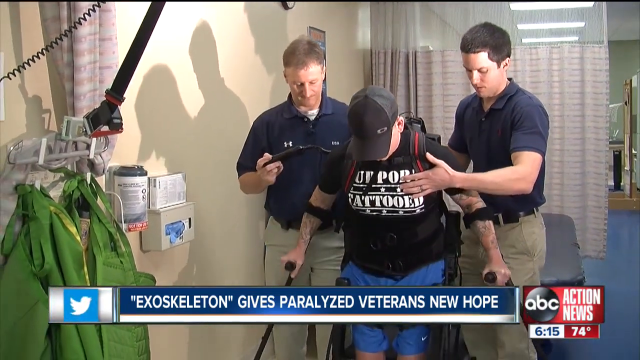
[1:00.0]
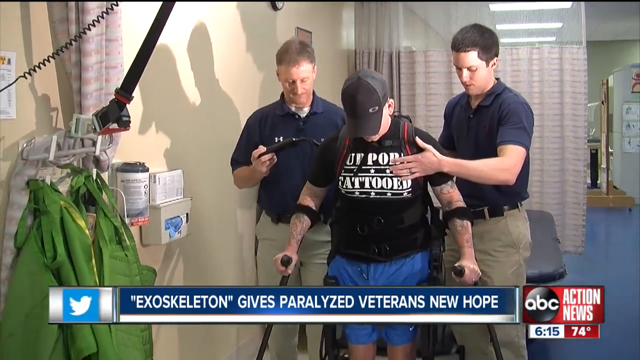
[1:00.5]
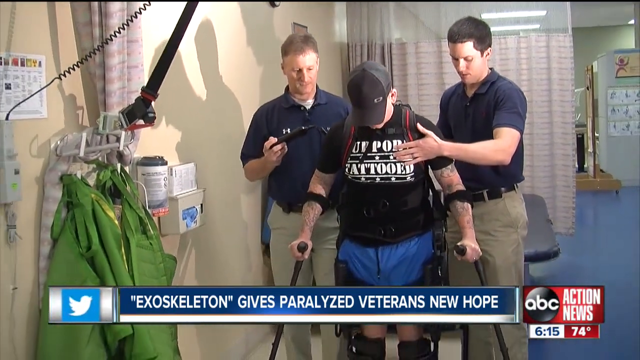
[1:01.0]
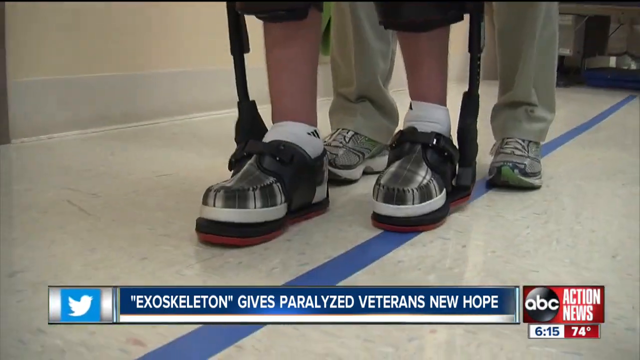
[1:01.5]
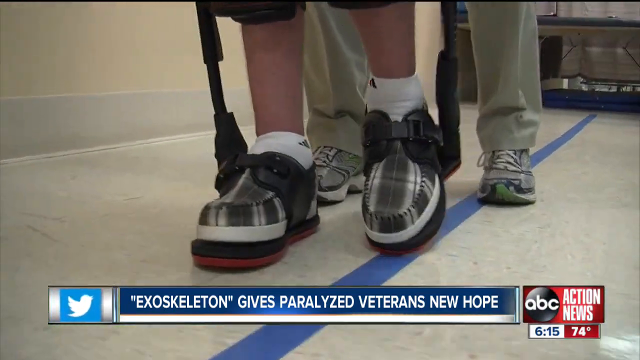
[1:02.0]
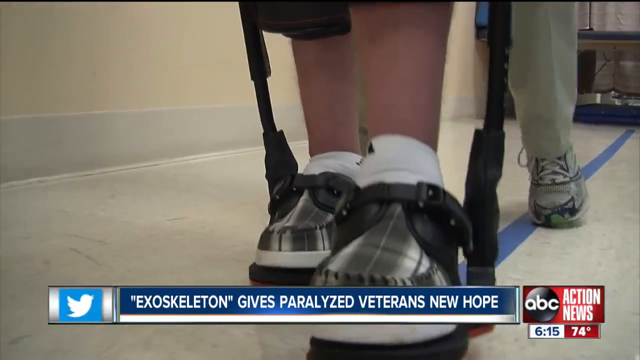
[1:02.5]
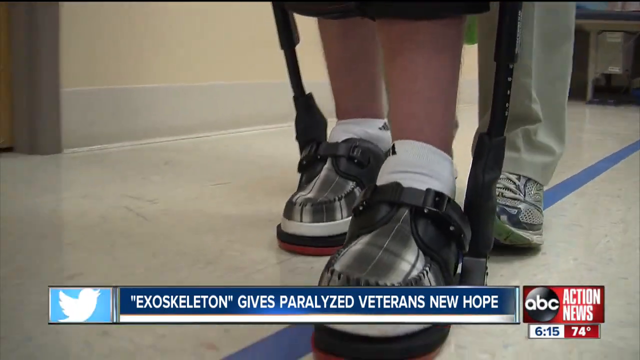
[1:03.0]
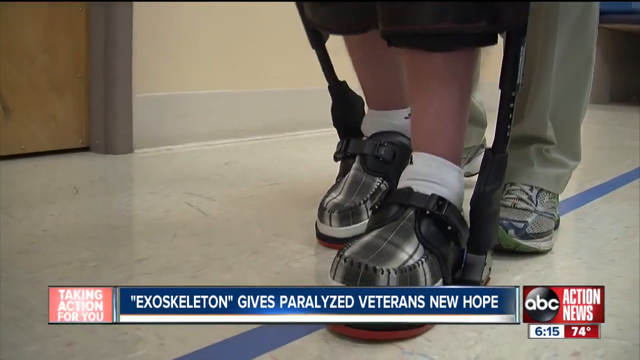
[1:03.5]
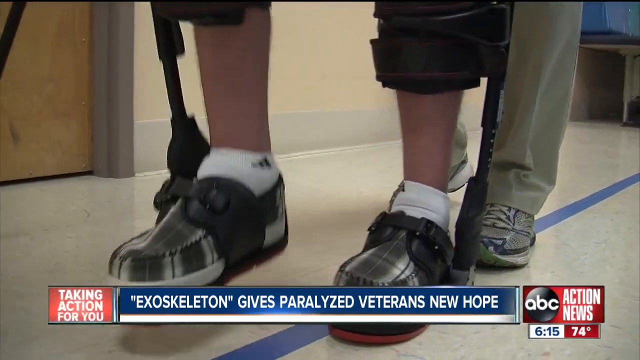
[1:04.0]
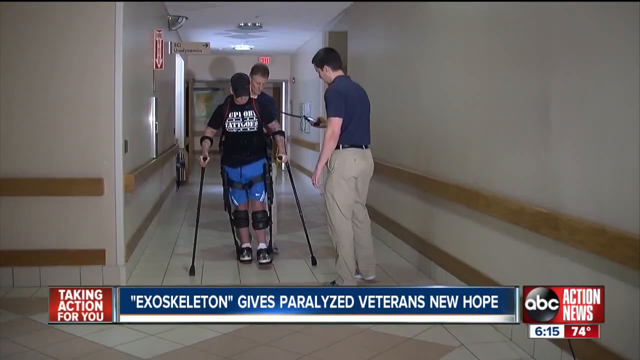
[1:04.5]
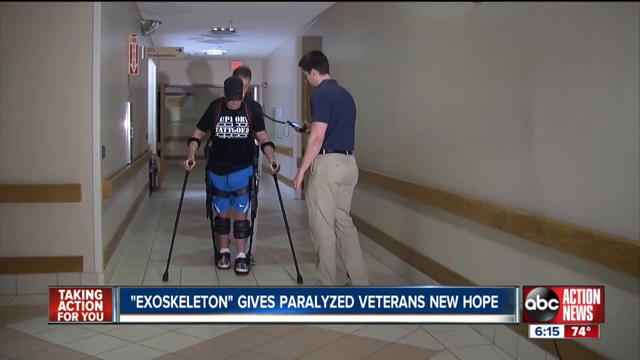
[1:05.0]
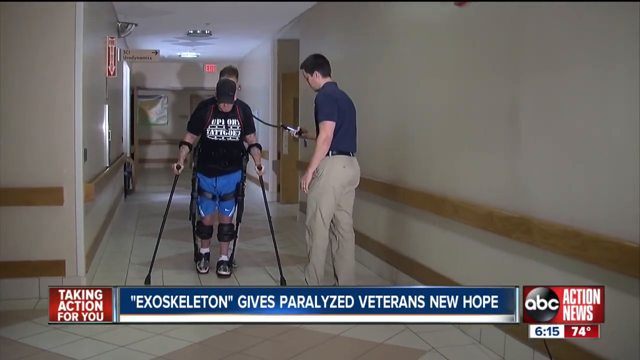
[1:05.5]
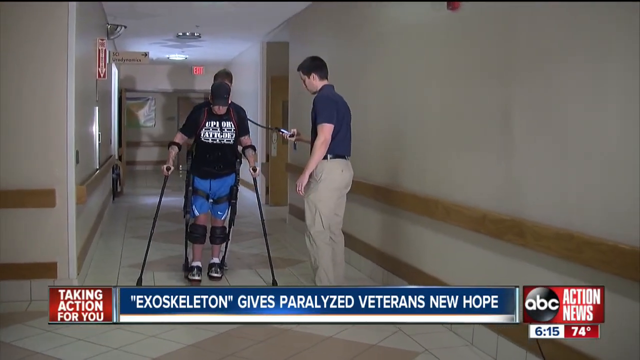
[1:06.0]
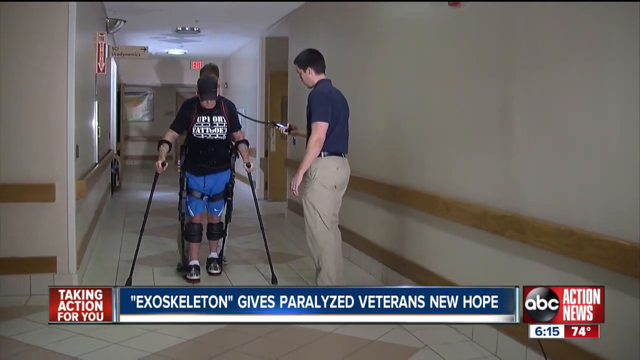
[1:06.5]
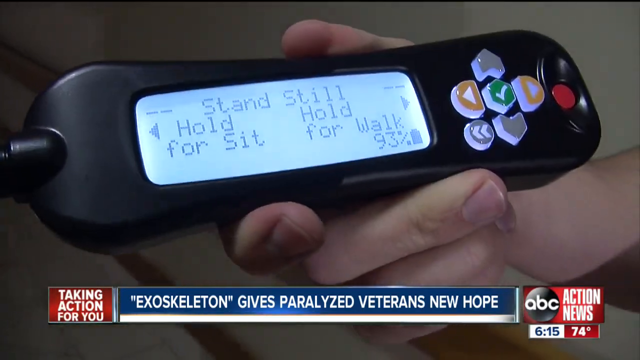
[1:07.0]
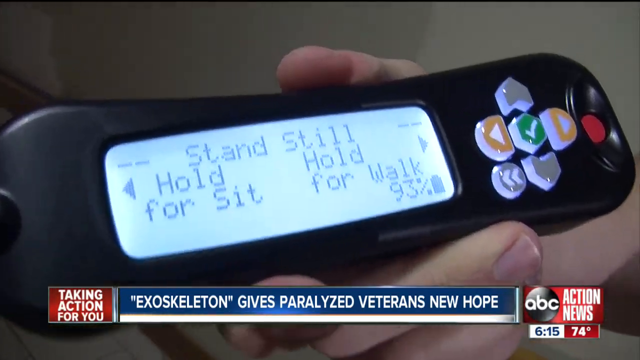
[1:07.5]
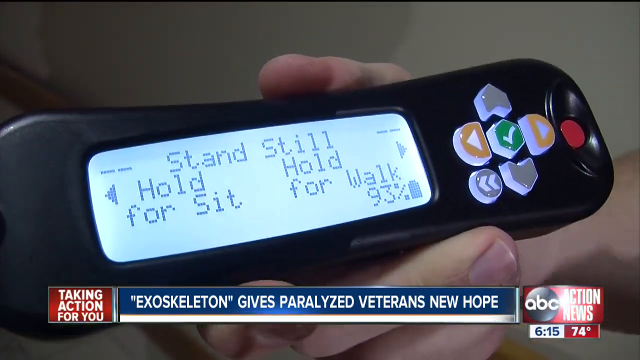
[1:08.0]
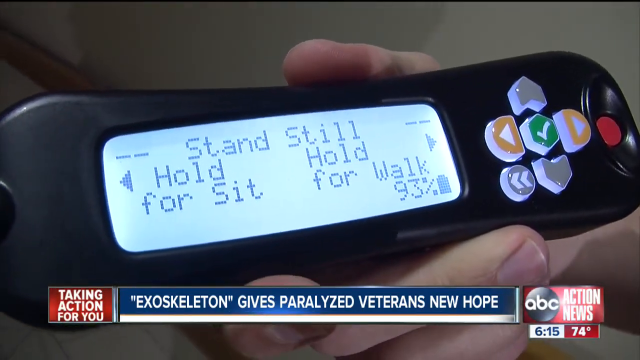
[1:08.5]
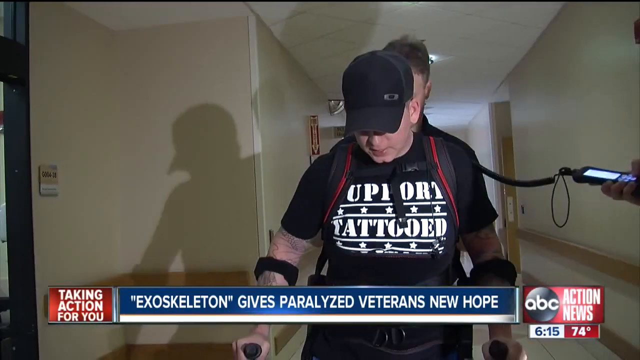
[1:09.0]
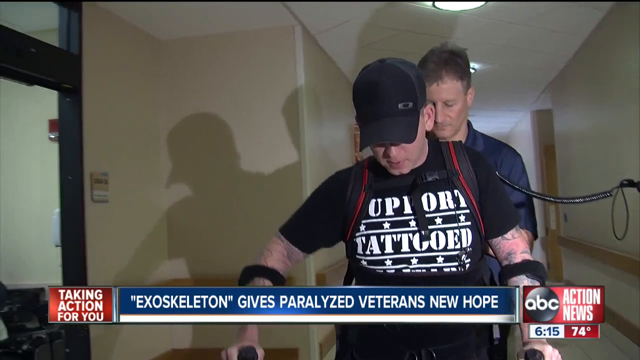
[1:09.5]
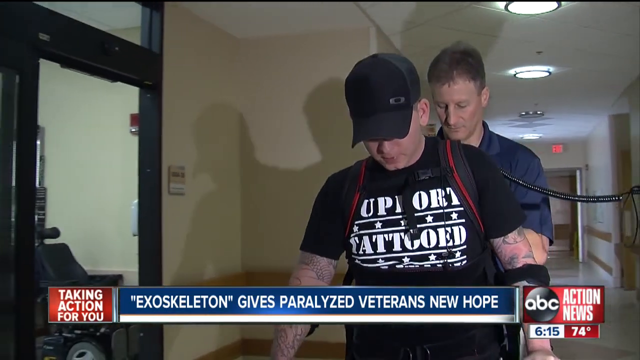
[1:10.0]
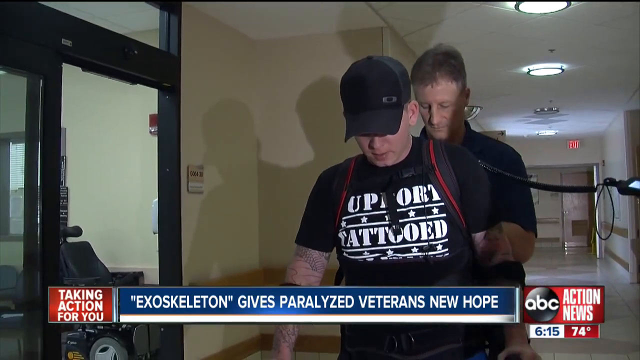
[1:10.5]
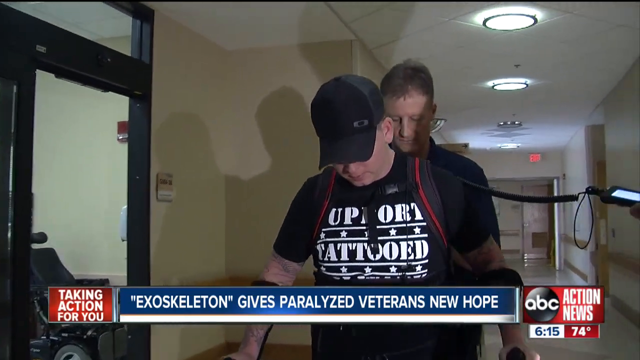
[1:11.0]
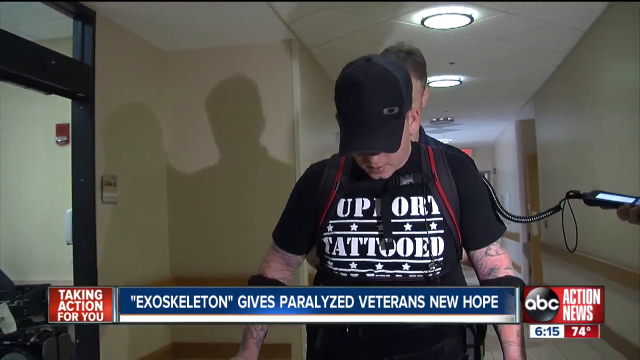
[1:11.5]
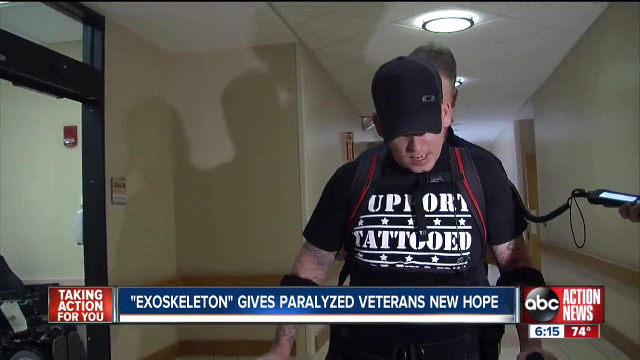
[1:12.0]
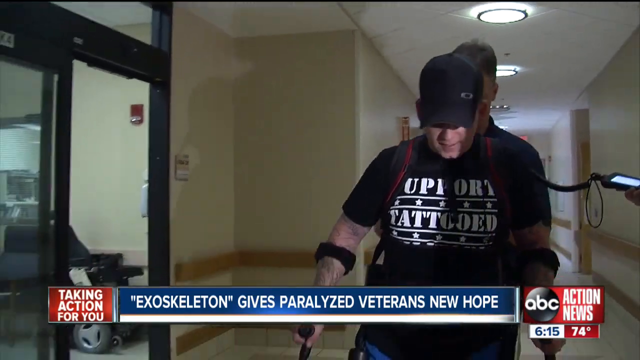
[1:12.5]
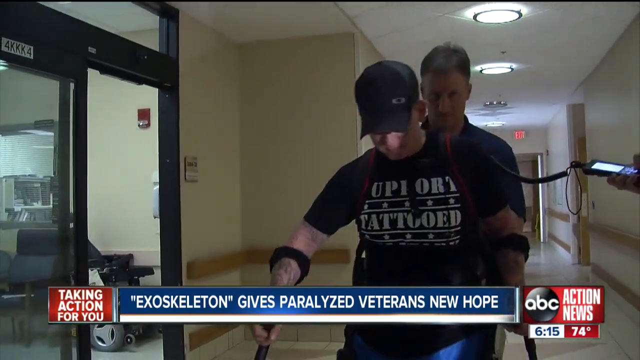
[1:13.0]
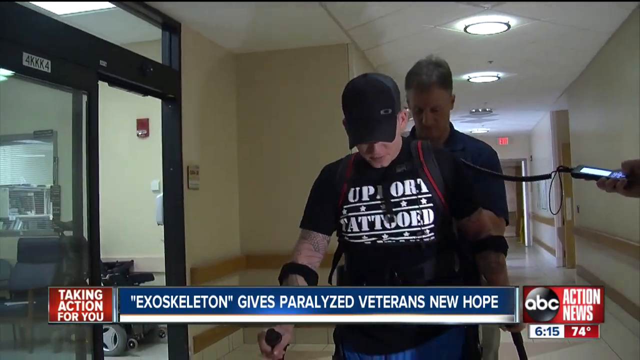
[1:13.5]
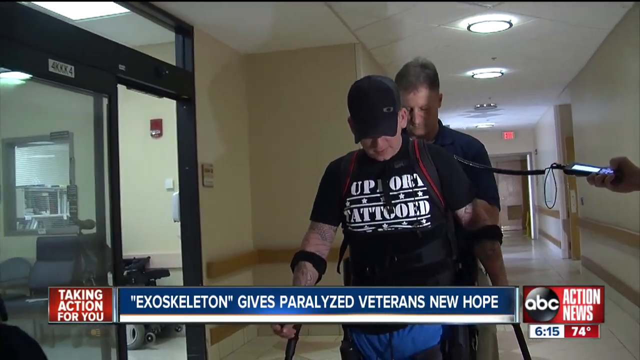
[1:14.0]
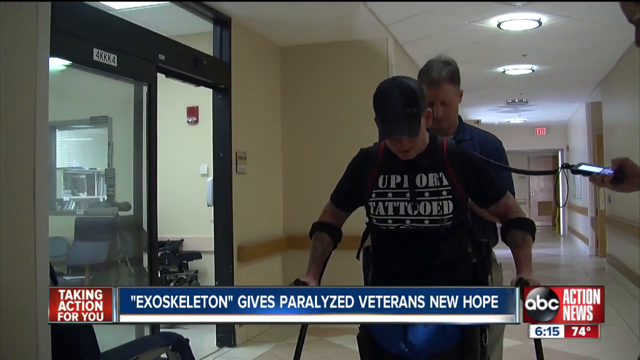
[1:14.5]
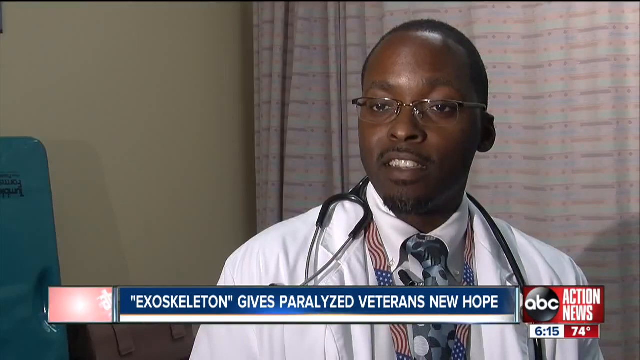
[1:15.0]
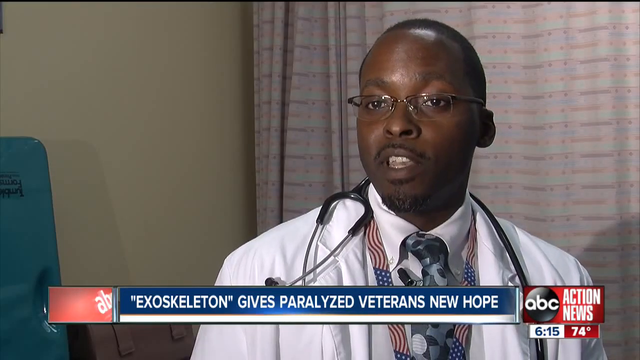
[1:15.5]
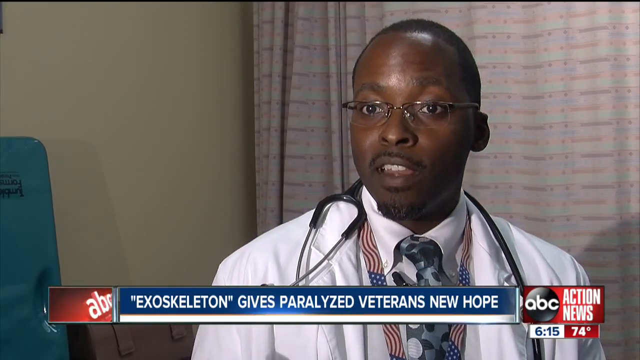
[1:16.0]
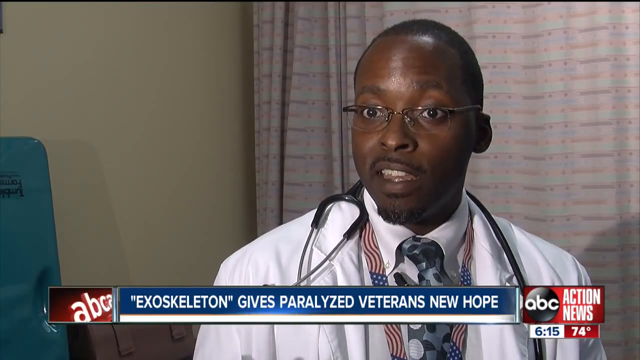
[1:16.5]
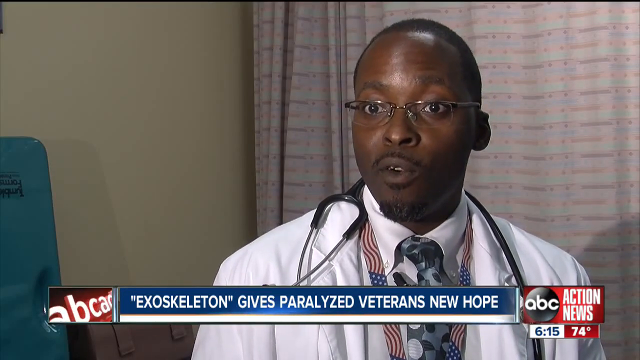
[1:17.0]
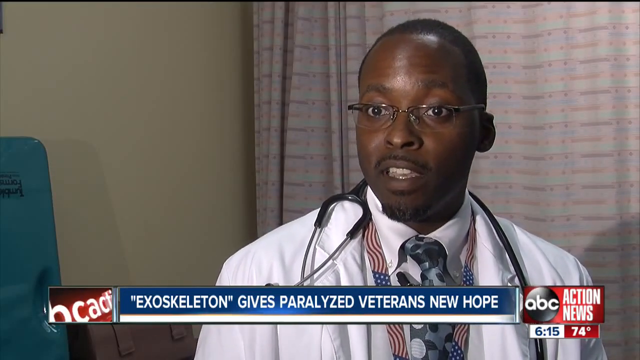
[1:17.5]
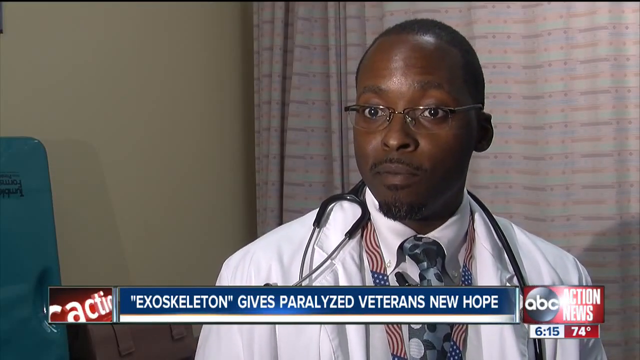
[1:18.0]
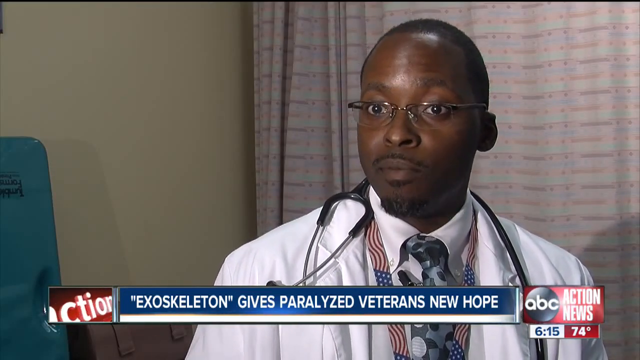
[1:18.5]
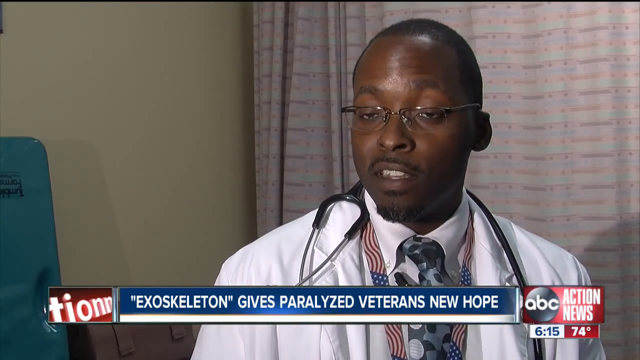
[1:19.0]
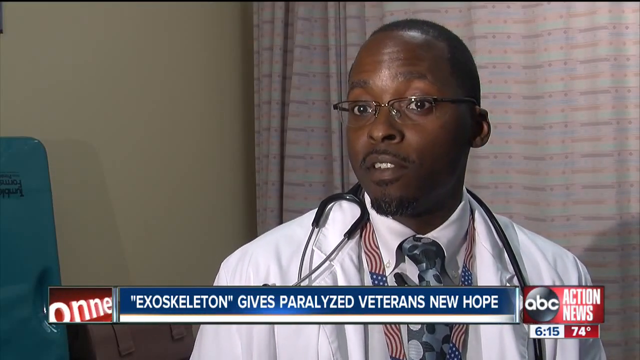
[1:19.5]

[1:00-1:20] Two men help a paralyzed soldier stand up from his wheelchair in an ABC Action News story titled "Exoskeleton gives paralyzed veterans new hope." With the help of braces and walking sticks, he walks down a hallway. The video cuts to what looks like a remote control with a screen and buttons, held in a person's hand; the screen reads "stand still, hold for sit, hold for walk." The soldier is once again shown walking through a hallway with assistance from the same two men, a bit unsteady but confident. A physician is then interviewed, wearing a white physician's coat, a stethoscope resting around his shoulders, and eyeglasses; he smiles and speaks matter-of-factly, with confidence.